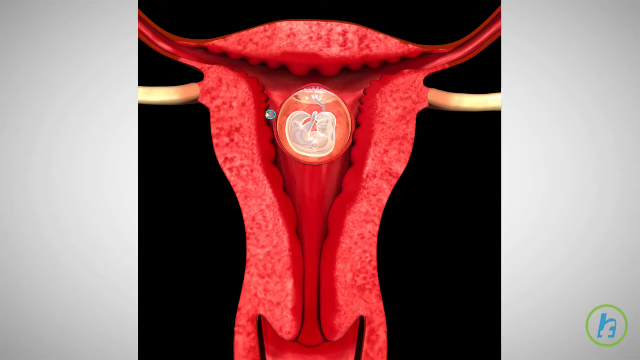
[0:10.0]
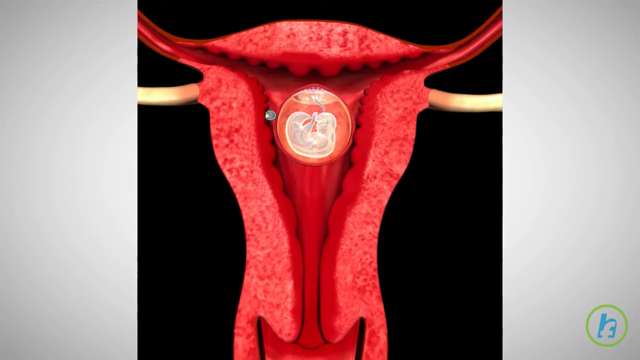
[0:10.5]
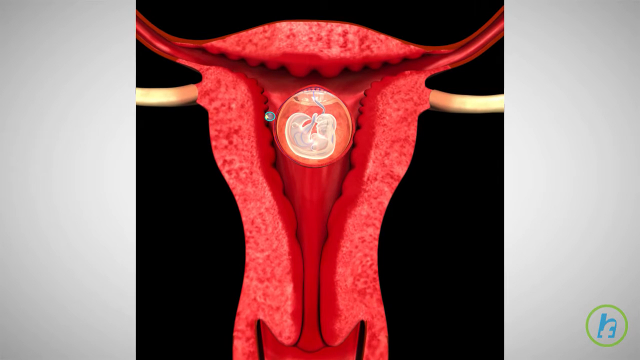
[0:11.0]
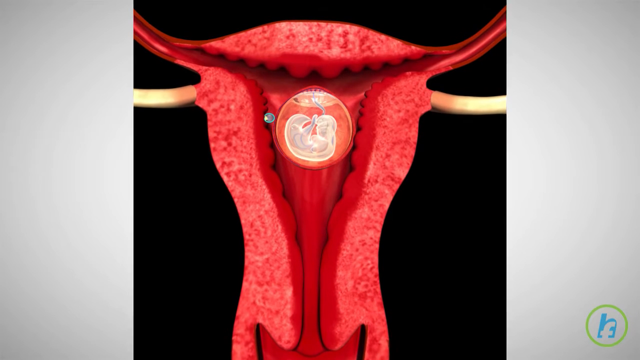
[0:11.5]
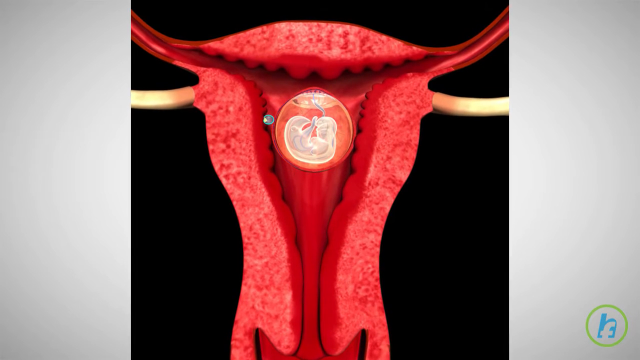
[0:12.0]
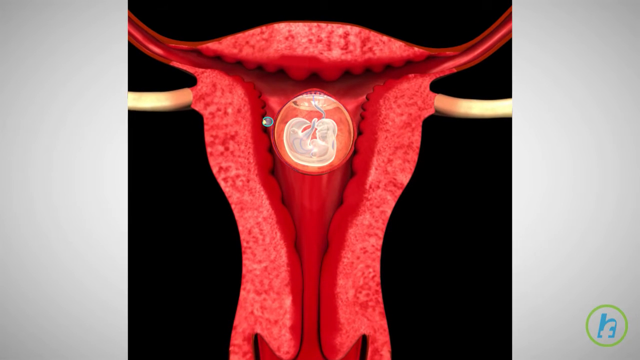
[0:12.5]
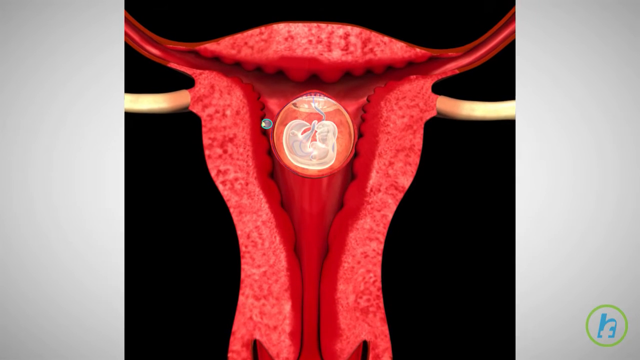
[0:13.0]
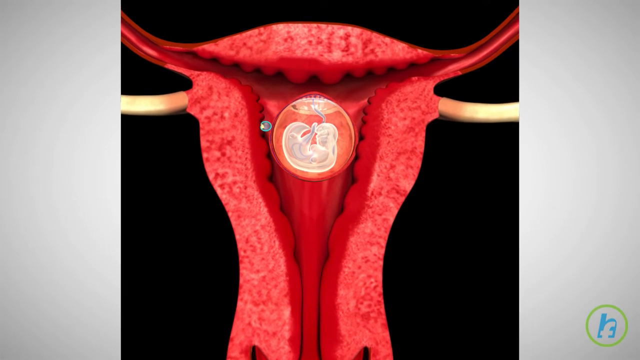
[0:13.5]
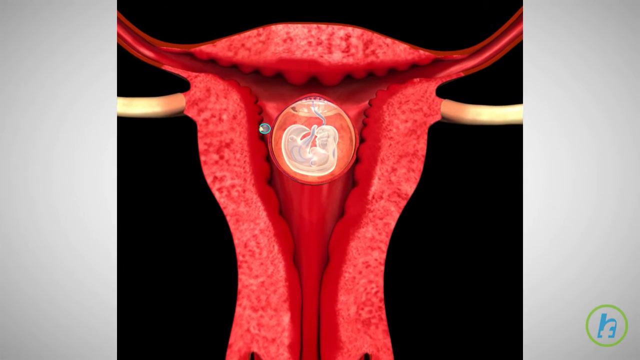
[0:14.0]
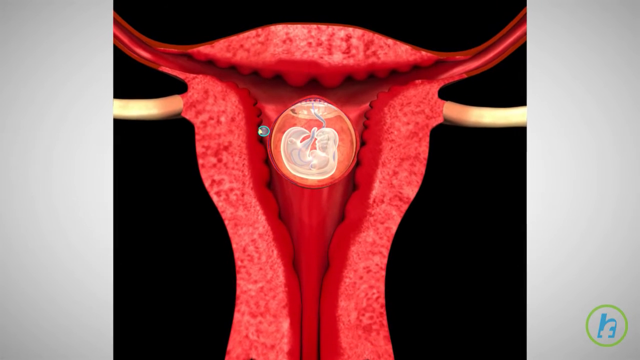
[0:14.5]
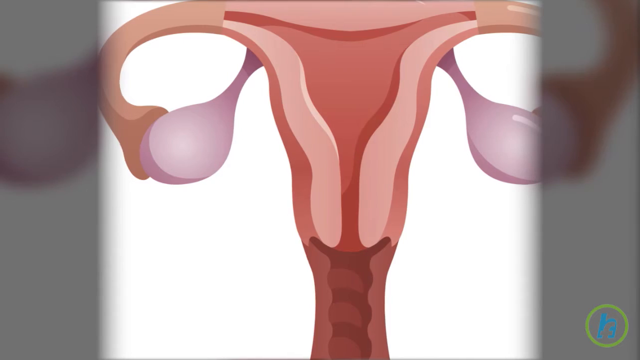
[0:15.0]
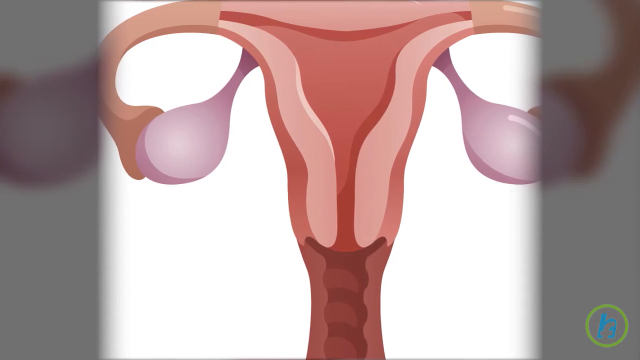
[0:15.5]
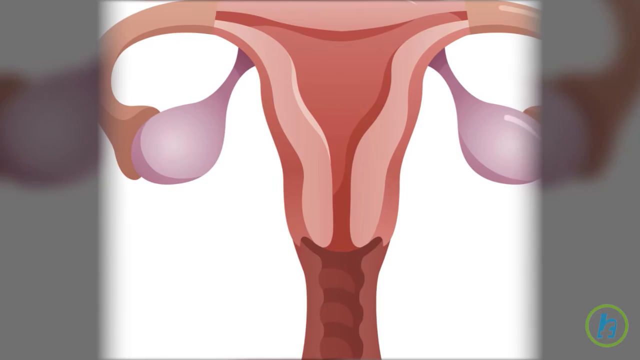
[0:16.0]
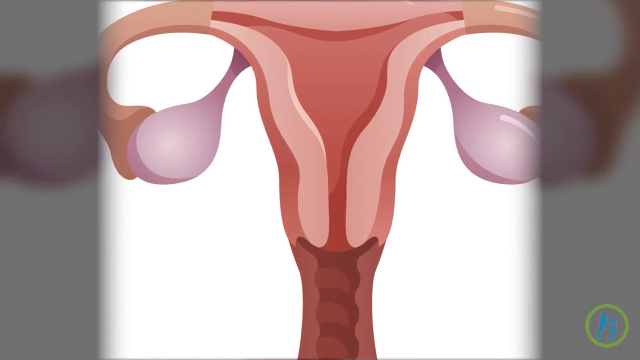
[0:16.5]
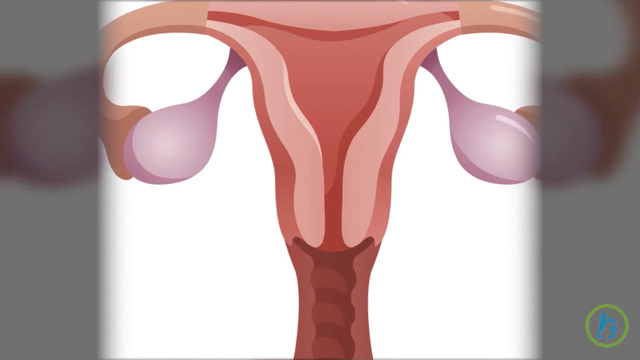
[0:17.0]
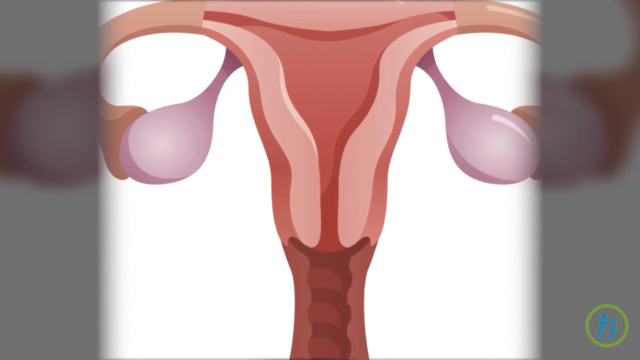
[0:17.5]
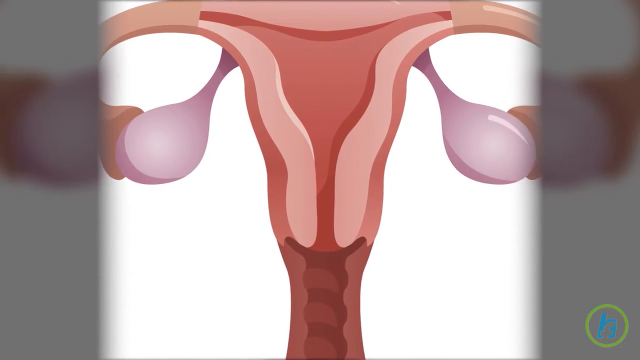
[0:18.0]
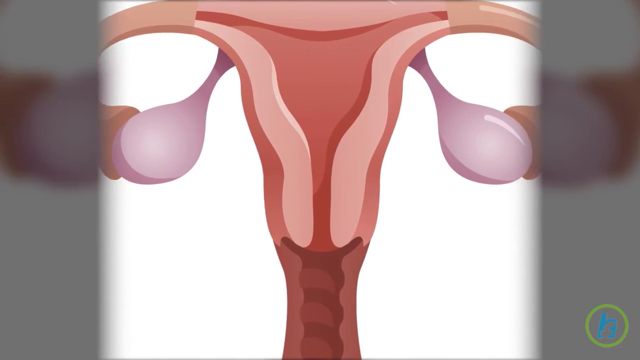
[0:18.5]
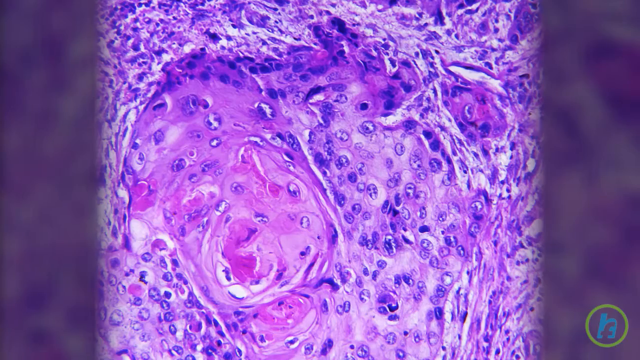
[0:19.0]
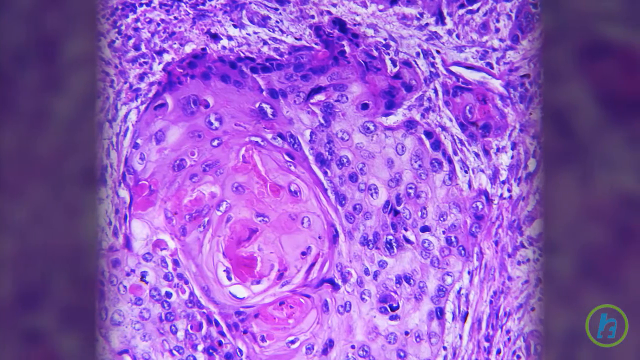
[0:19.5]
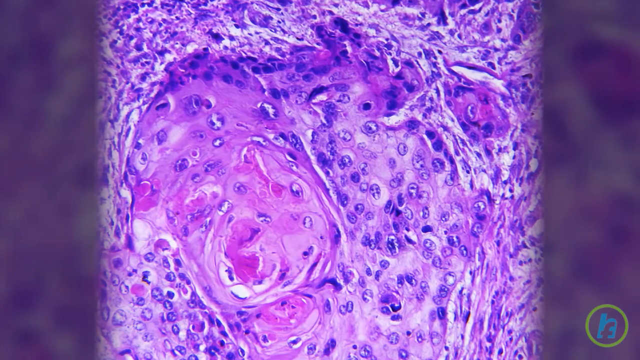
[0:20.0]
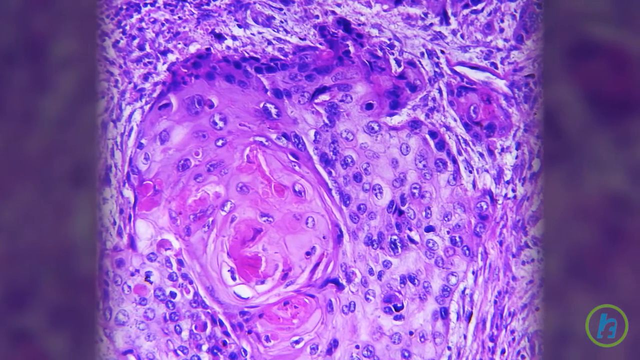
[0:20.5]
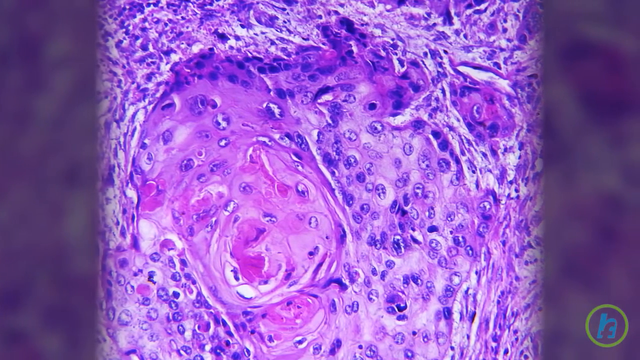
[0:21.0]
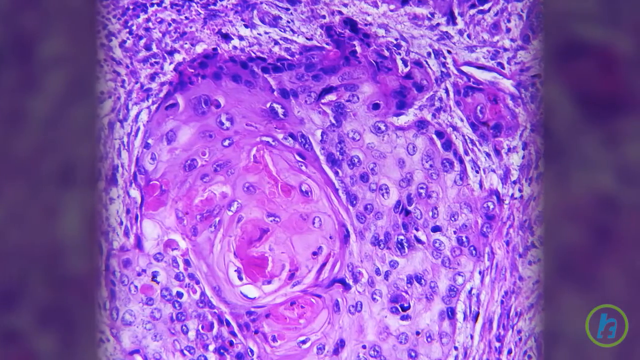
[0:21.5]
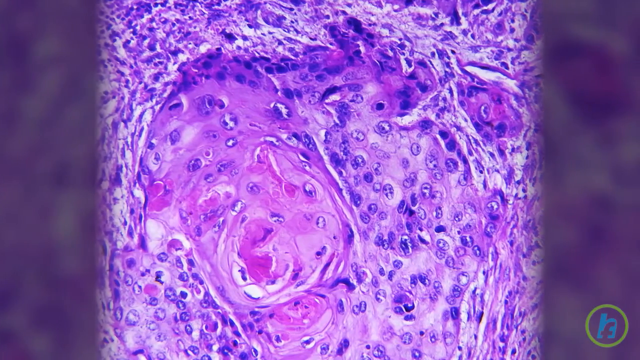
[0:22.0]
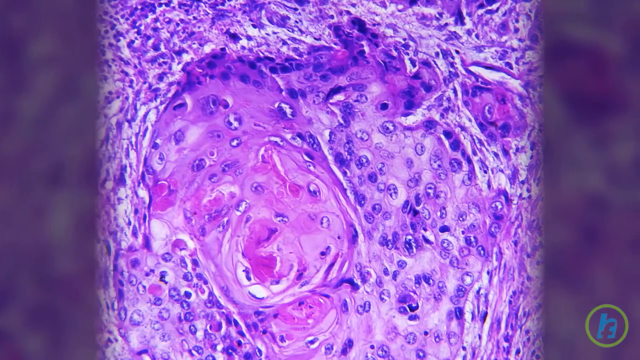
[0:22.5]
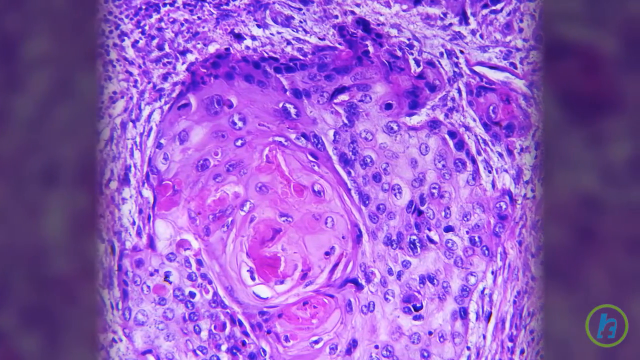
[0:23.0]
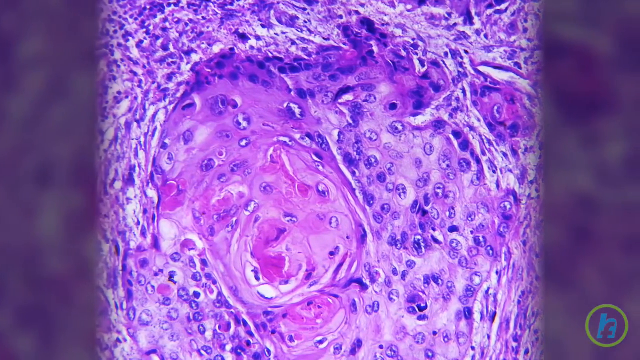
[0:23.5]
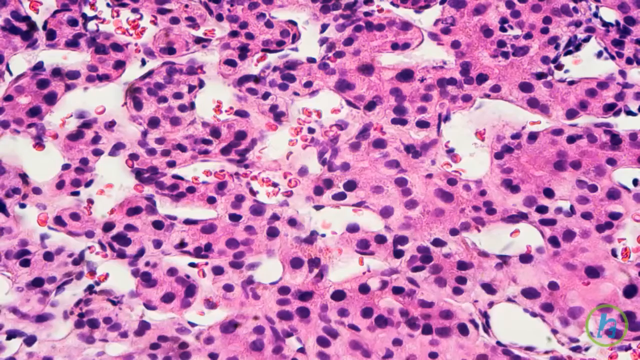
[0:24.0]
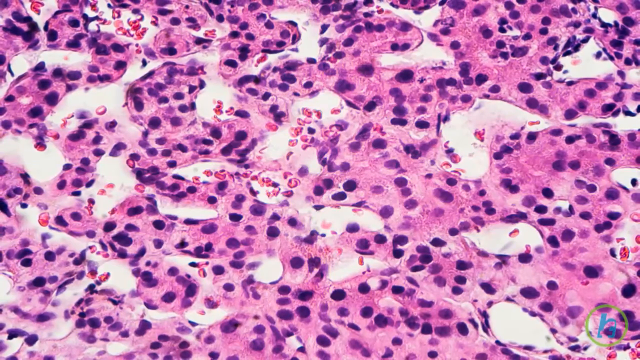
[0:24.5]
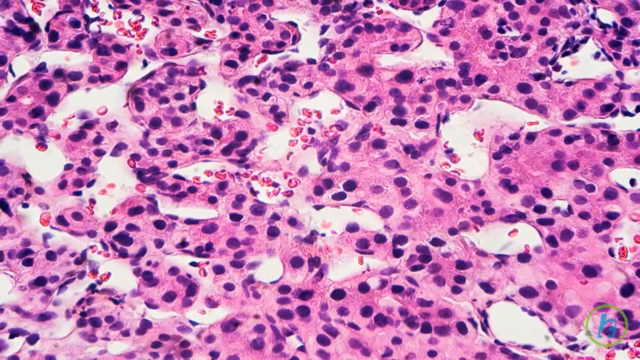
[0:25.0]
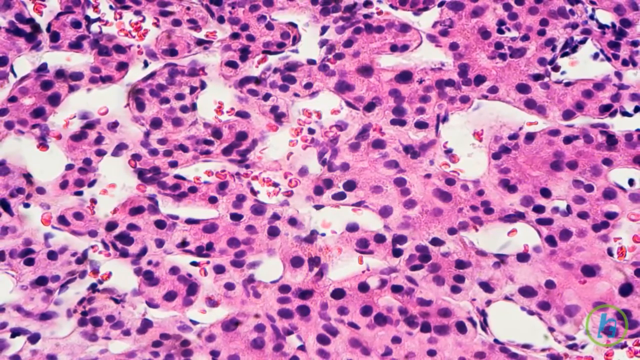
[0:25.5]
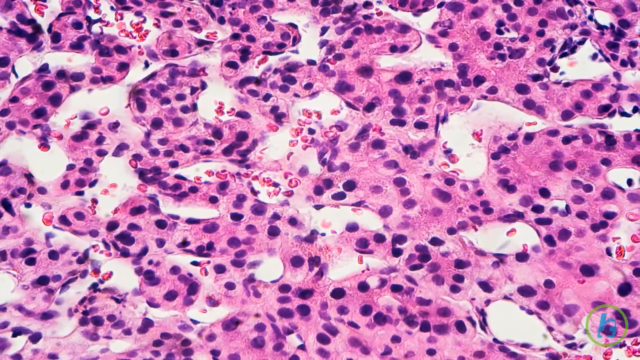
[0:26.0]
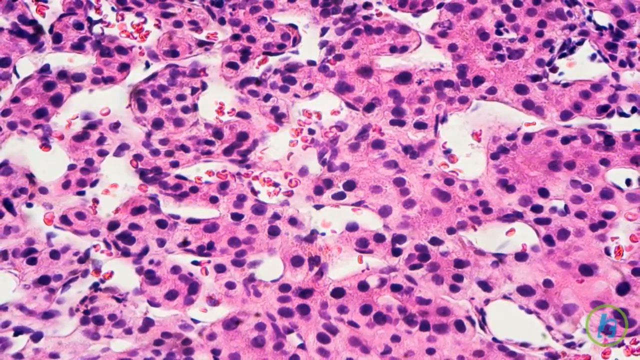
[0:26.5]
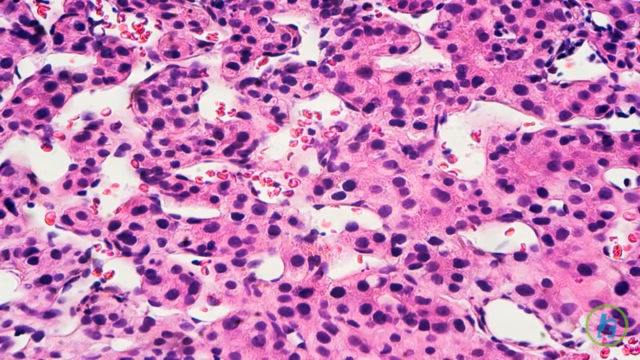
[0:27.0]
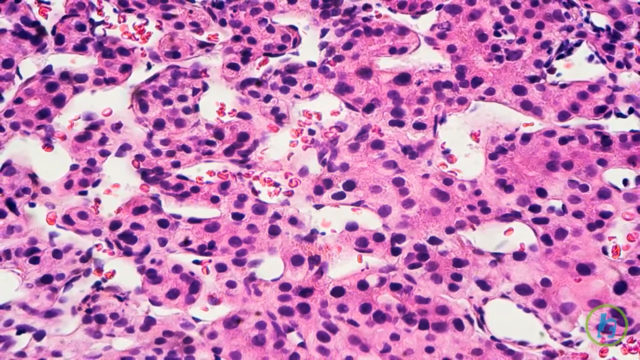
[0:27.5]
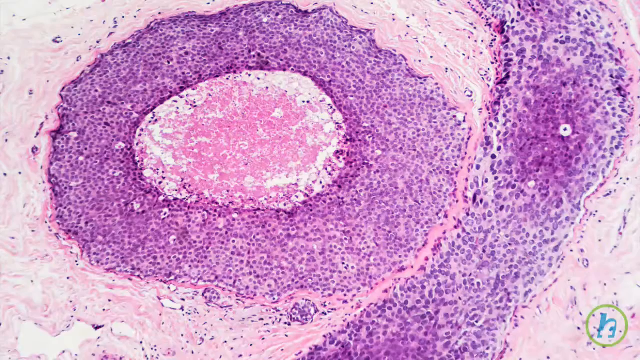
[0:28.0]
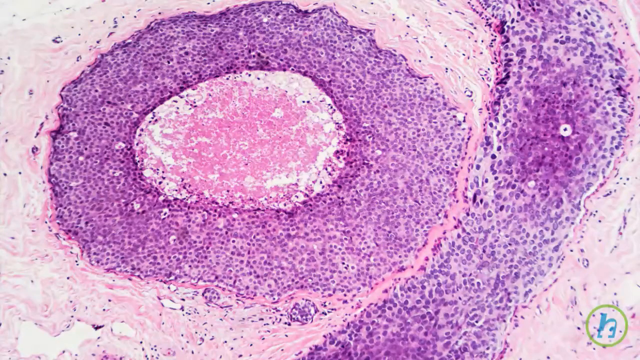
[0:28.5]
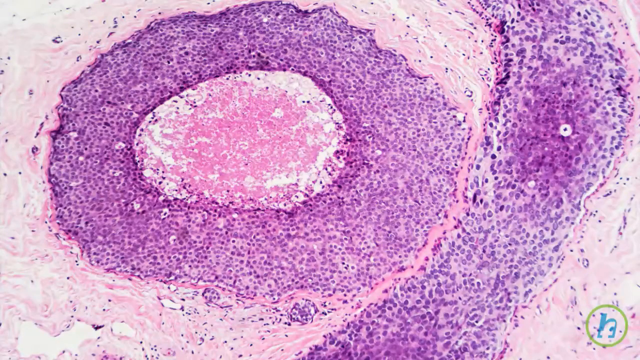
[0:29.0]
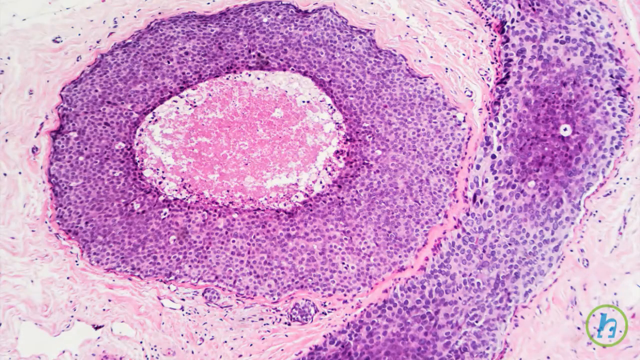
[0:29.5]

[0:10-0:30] A closer look shows the top part of the bottom section where excrement comes out. It is apparently female, since an embryo is growing inside the midsection of the private part. The little embryo is in a little protective bubble, sitting in there curled into a ball, going through the process of birth. Another view of the same thing follows without the embryo; it is more of a 2D image, whereas the first was more of a 3D-generated one. After that, a lot of purplish drop patterns appear, like a painting with many different molecules moving across it, like a bunch of cells.